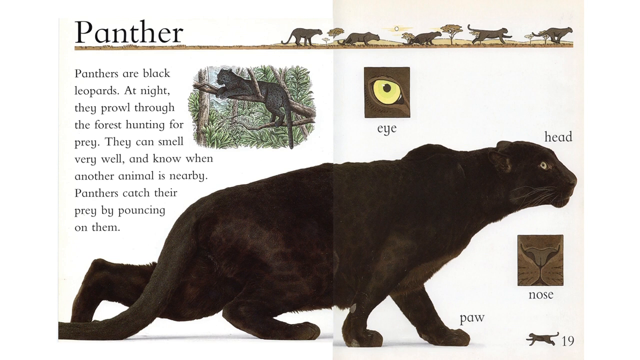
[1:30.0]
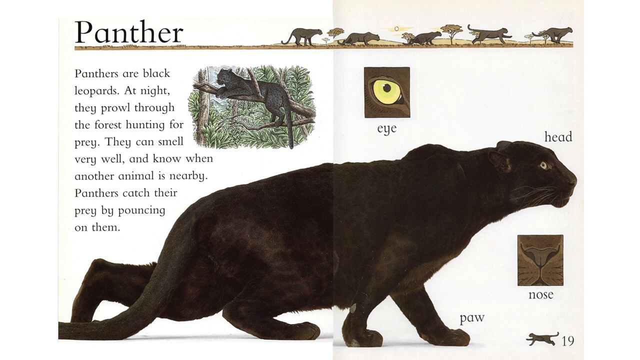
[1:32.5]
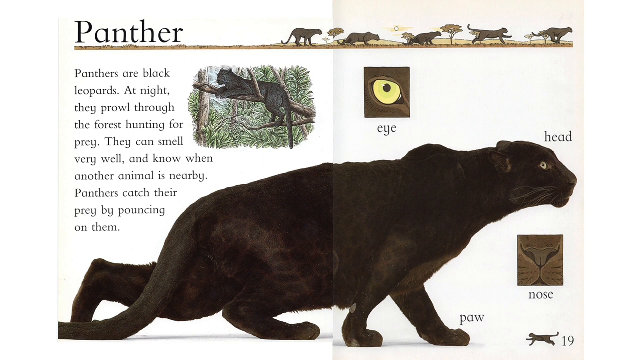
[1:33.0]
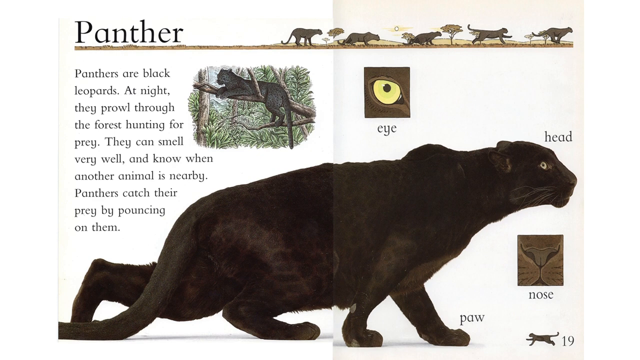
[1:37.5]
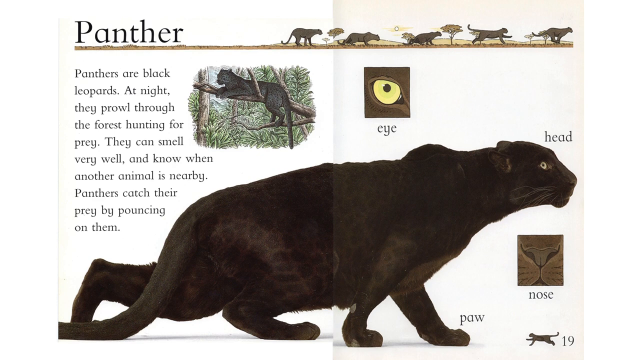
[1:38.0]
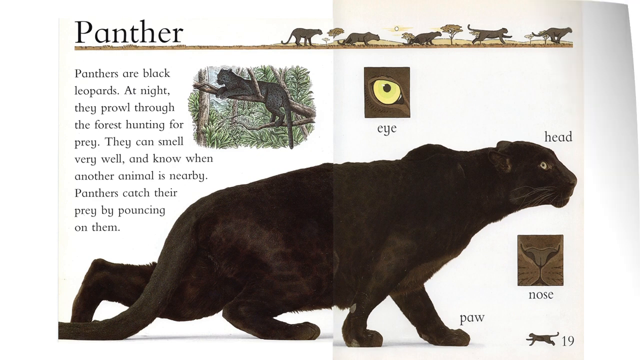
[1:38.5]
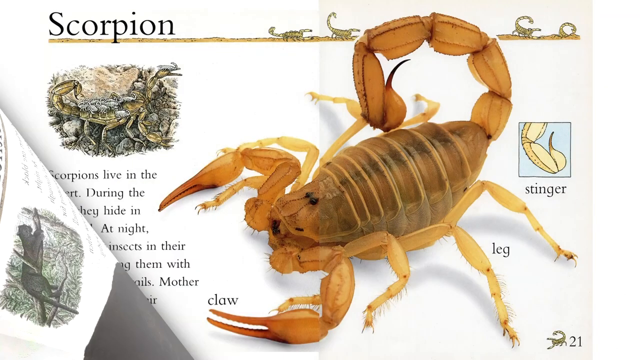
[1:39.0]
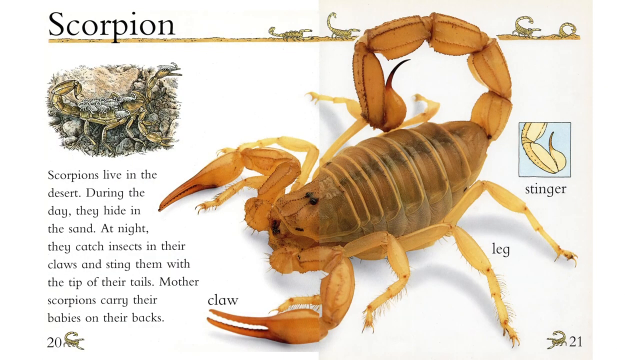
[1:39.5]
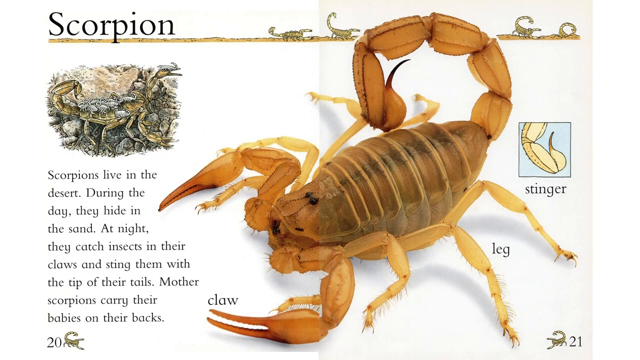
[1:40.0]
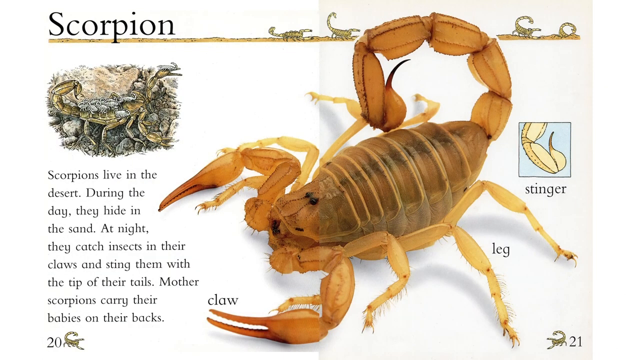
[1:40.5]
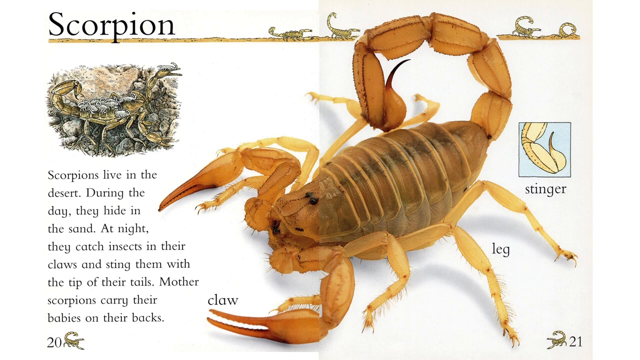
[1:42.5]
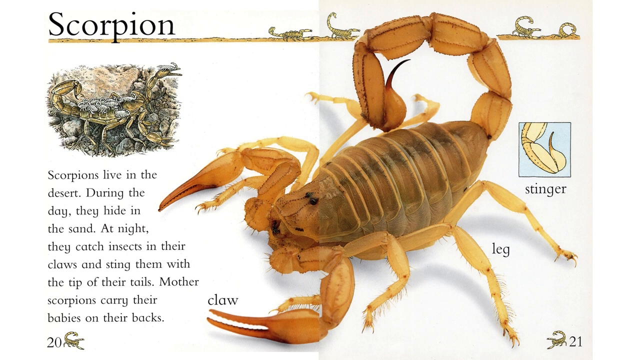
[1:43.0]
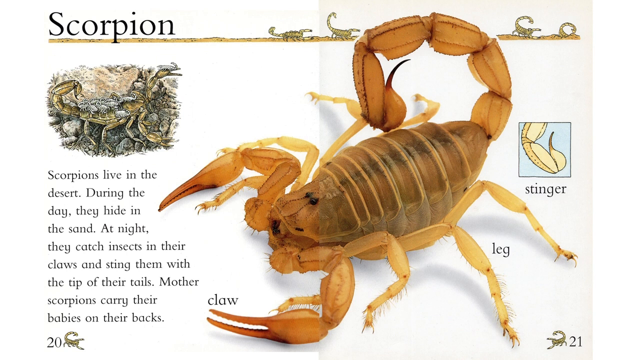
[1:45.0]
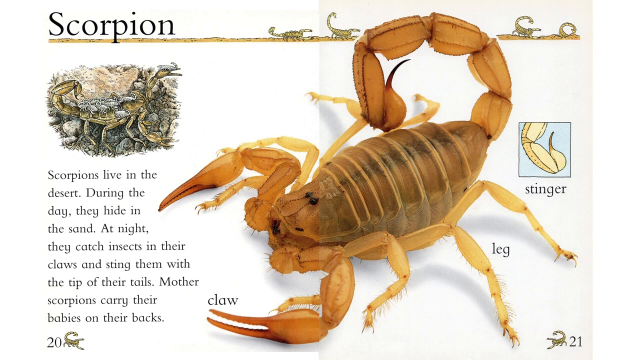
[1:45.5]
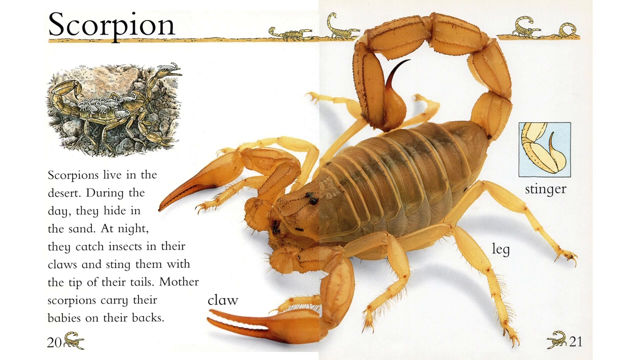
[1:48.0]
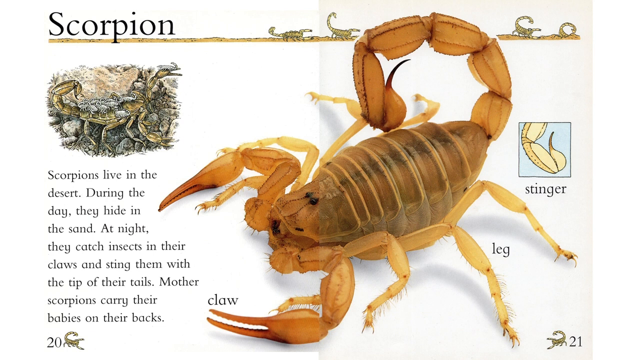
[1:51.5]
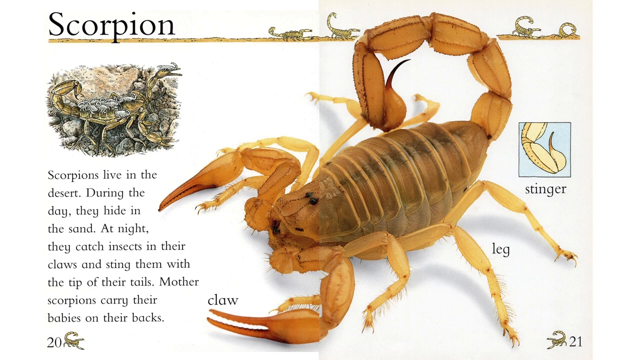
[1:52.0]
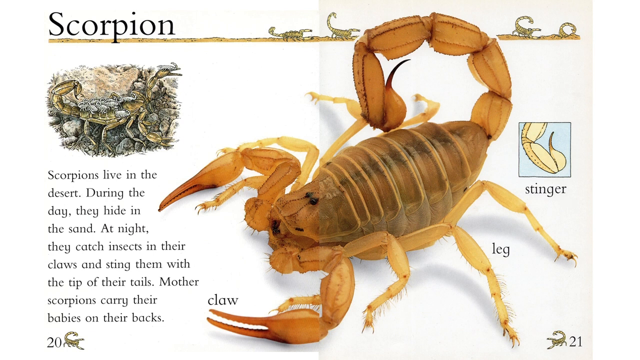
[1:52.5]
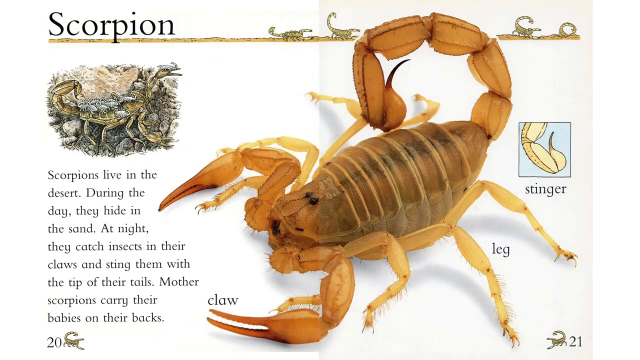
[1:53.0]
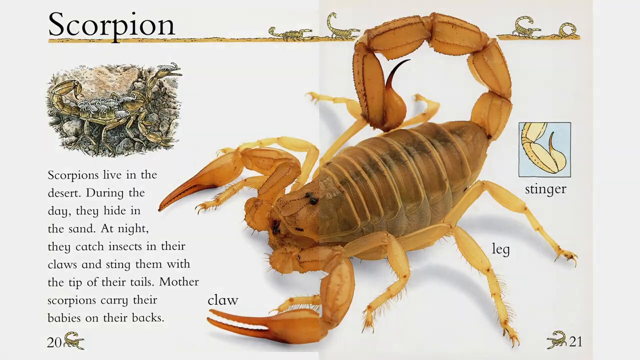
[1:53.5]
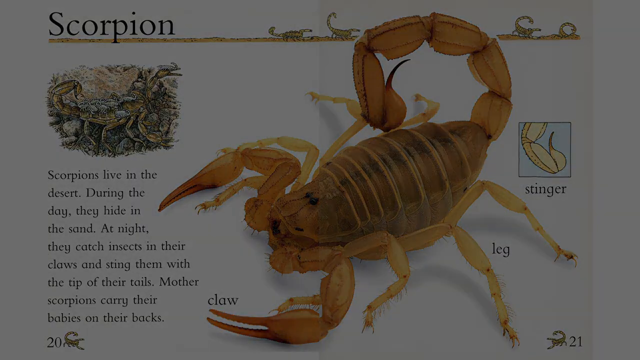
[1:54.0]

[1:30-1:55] A panther page shows the panther's eyes, which look very dangerous, along with its head, nose and paws. There is a picture of the panther laying on the stem of a tree. The text reads "Panthers are black leopards." and "They can smell very well and know when another animal is nearby. Panthers can catch their prey by pouncing on them." Another passage reads "During the day they hide in the sand." and "Mother scorpions carry their babies on their backs." A picture of a scorpion is above the words.